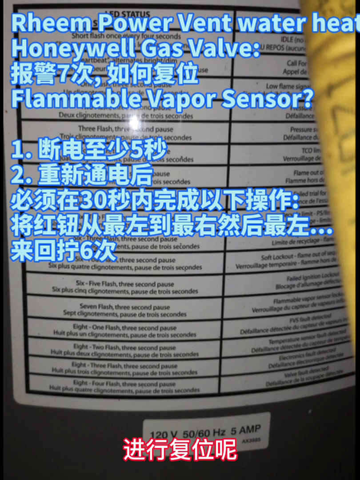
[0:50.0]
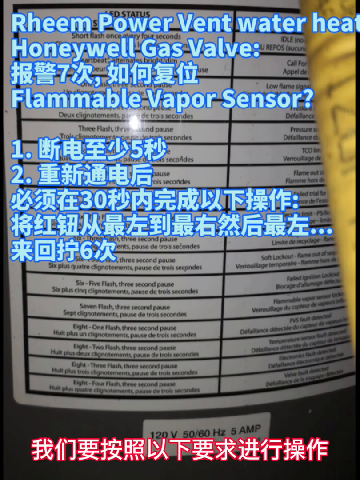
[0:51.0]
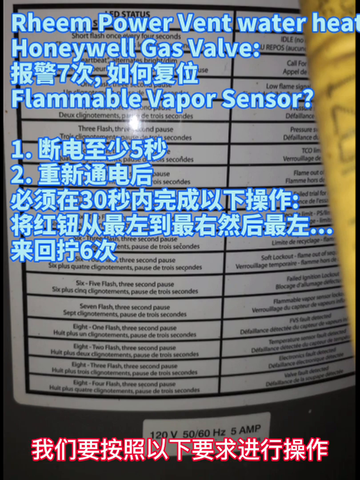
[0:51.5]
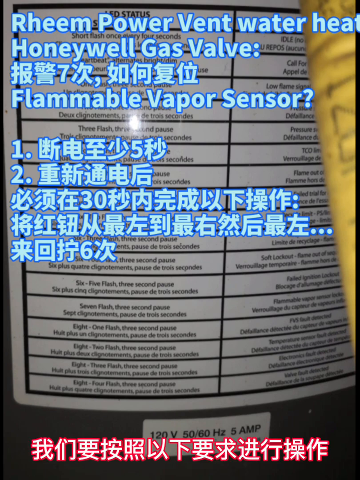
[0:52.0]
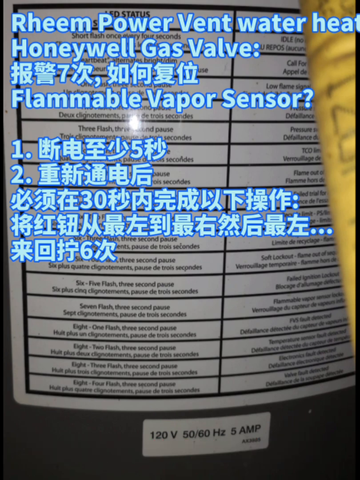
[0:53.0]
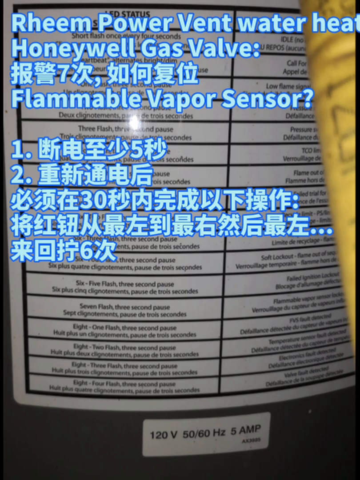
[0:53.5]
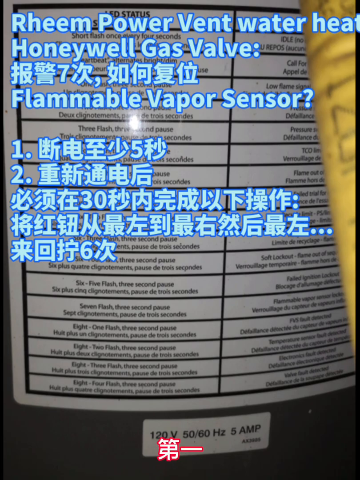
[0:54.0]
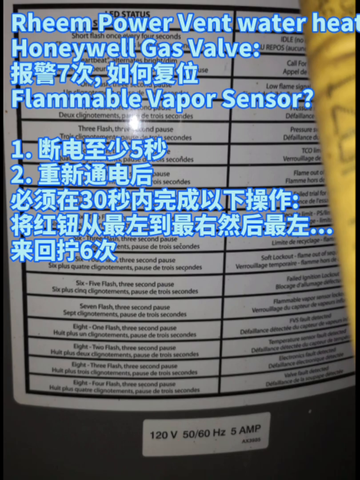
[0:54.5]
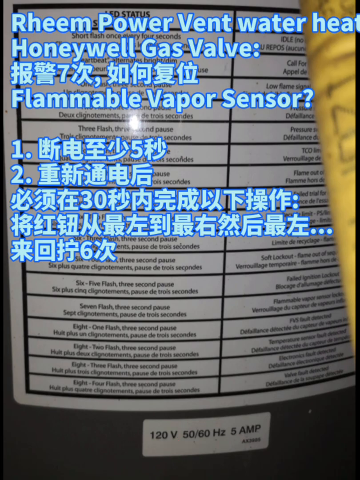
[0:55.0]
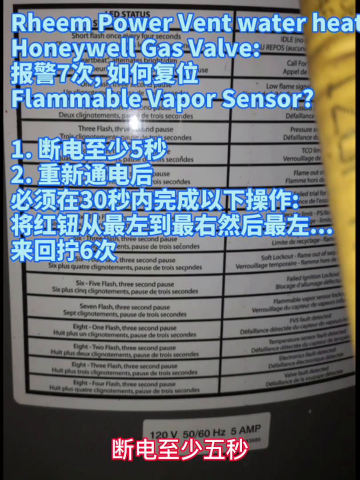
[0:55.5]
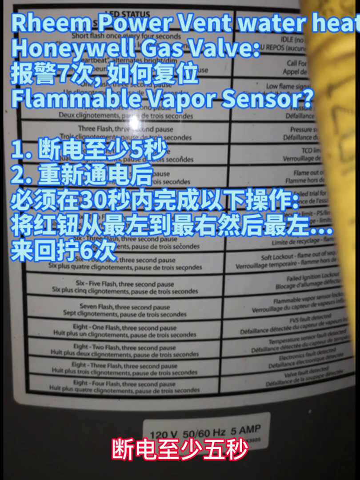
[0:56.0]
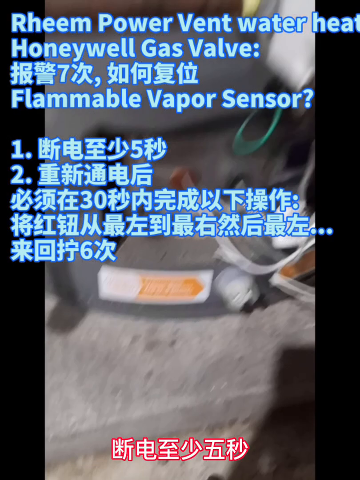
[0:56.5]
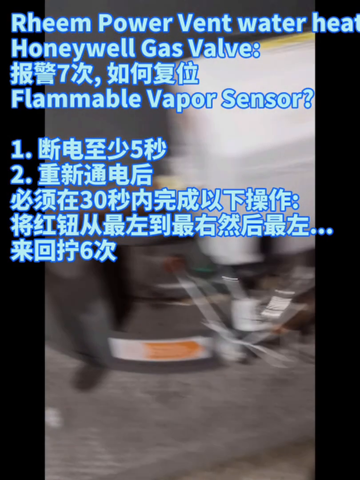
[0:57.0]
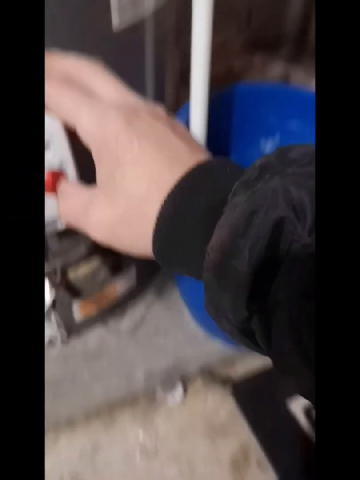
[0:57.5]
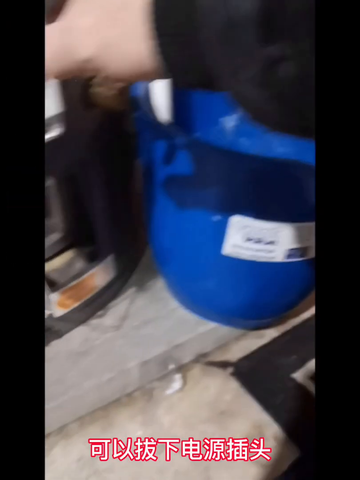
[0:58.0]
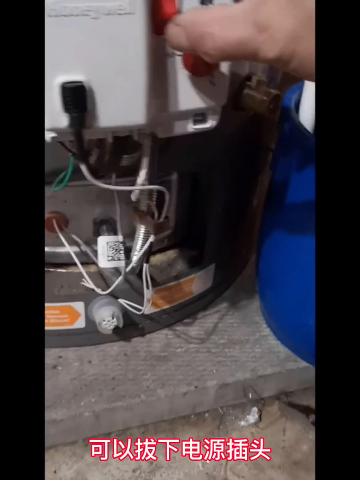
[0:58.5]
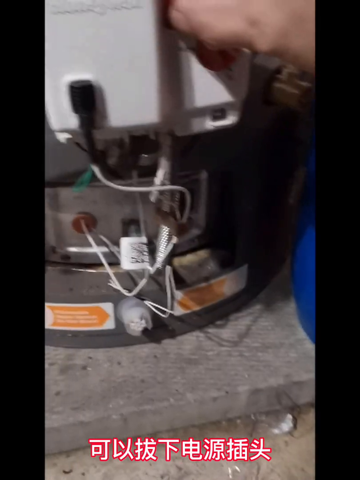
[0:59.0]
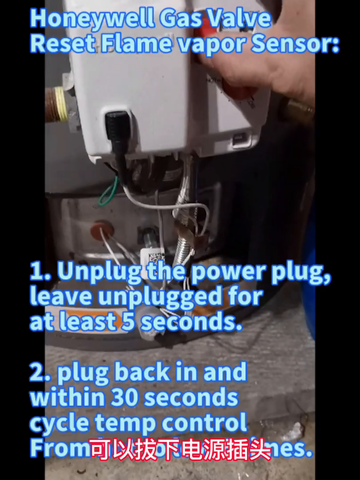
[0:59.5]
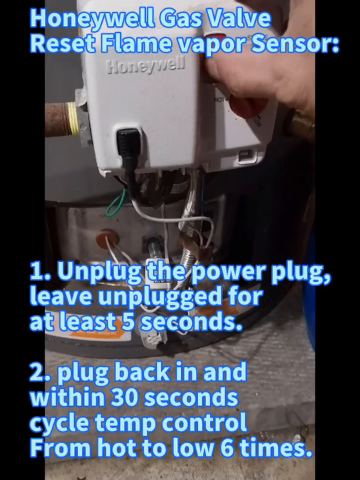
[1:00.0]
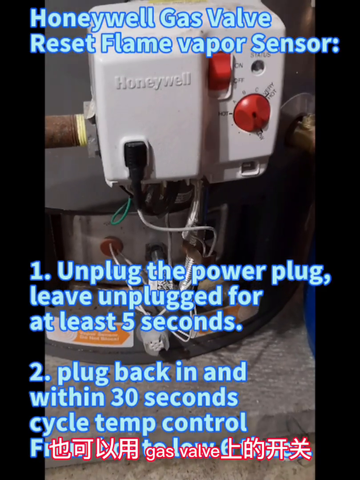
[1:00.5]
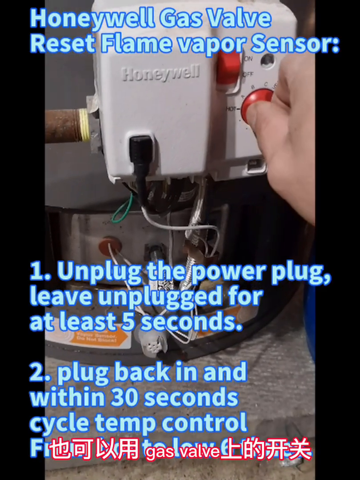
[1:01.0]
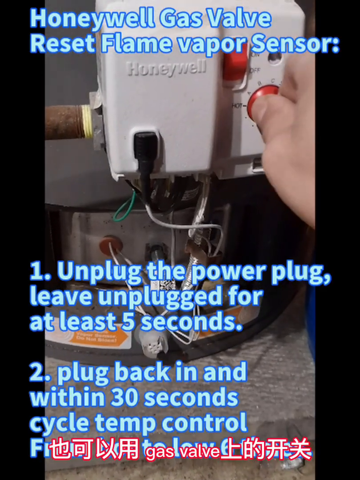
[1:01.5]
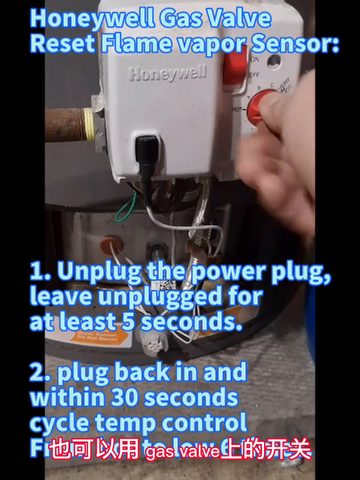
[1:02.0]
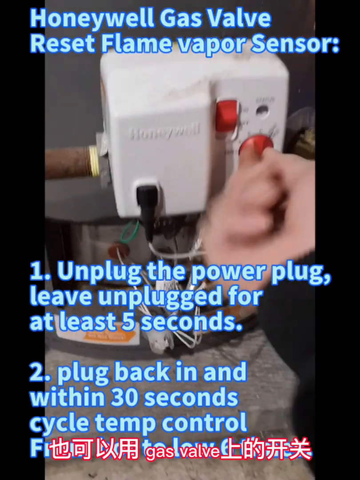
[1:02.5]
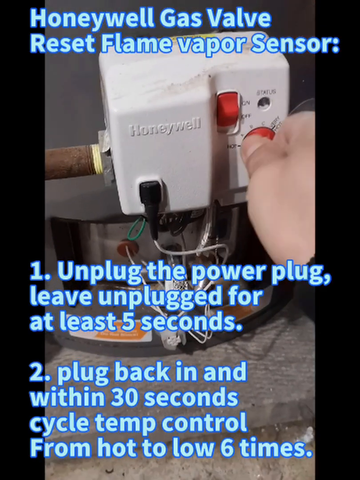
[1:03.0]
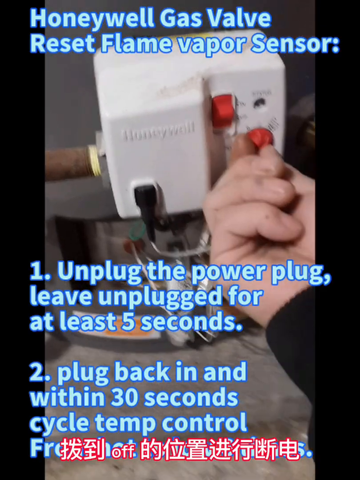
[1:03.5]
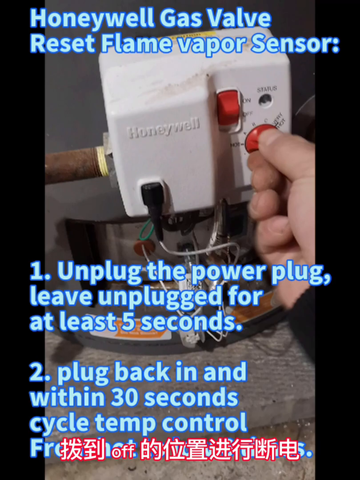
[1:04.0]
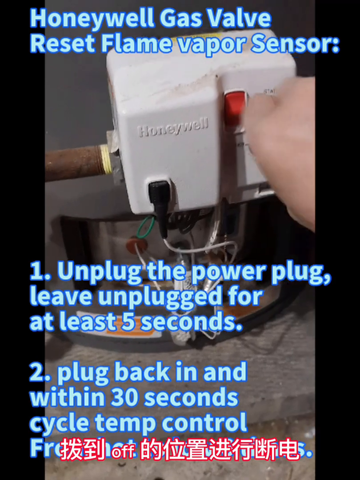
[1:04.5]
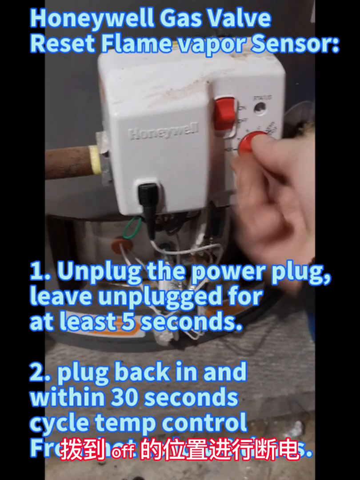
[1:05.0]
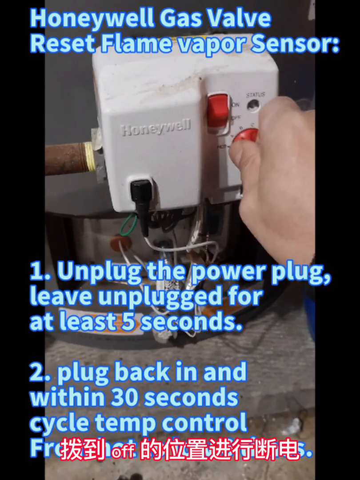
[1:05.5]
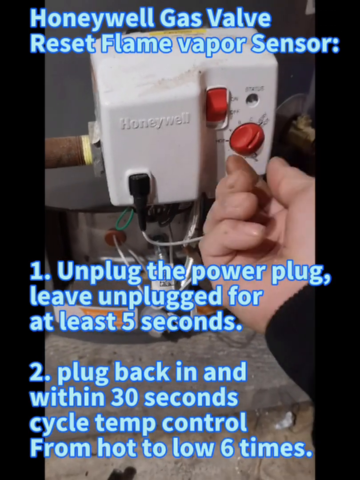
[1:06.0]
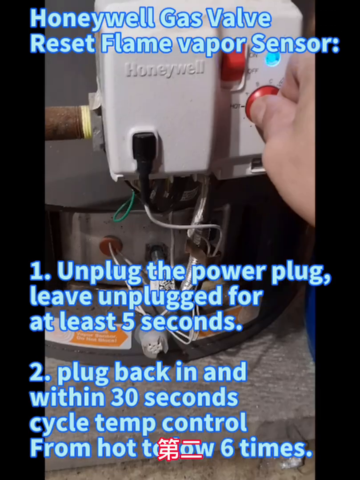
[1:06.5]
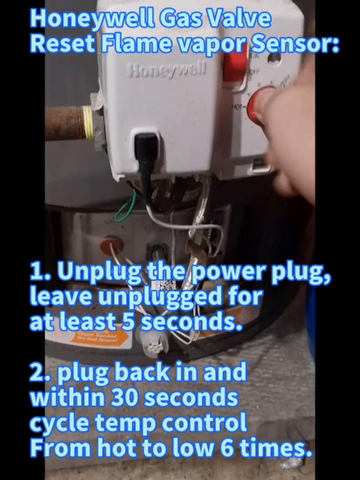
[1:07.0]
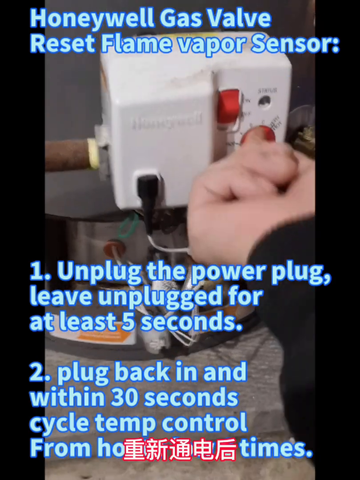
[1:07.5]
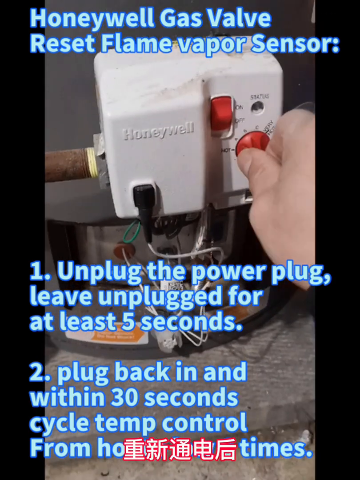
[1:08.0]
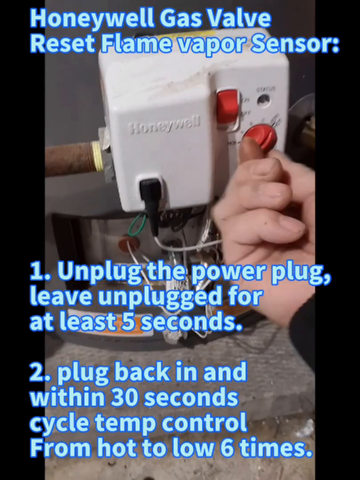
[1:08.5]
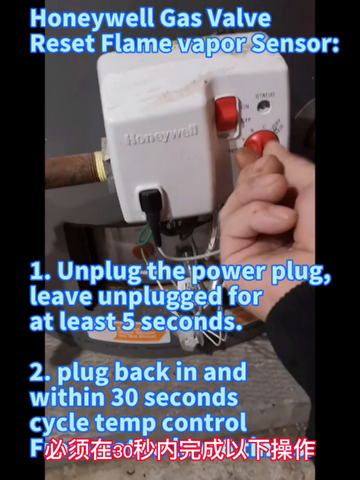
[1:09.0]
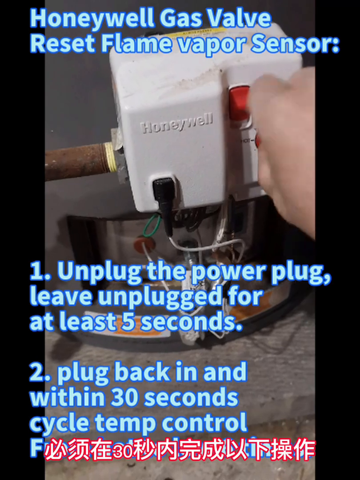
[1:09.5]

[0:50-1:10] The video shows how to troubleshoot the gas valve, with the text "reset flame vapor sensor." It seems to show turning it on or flipping a switch. Instructions read: "number one unplug the power plug leave unplugged for at least five seconds" and "number two plug back in and within 30 seconds cycle temp control," from hot to low six times. A man turns the temp control back and forth, about six times, so that it looks like it is just spinning around.